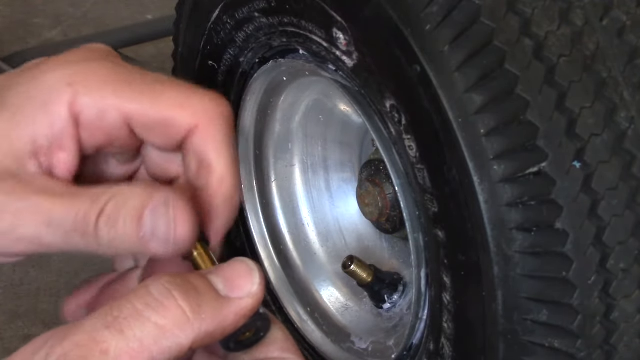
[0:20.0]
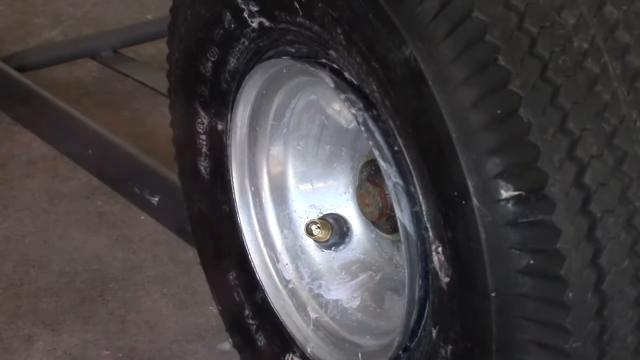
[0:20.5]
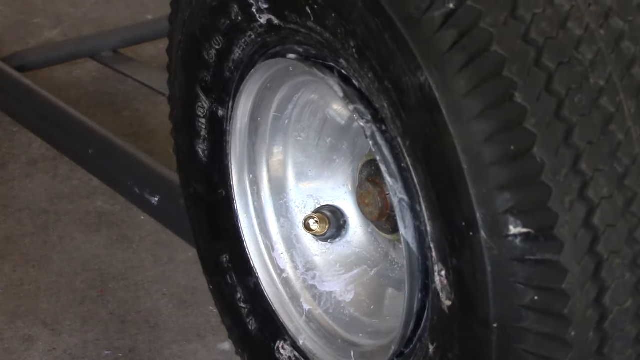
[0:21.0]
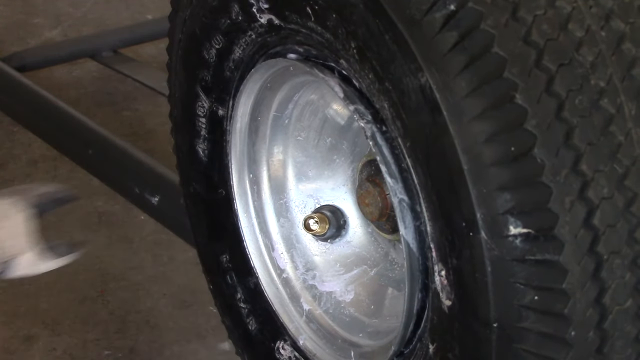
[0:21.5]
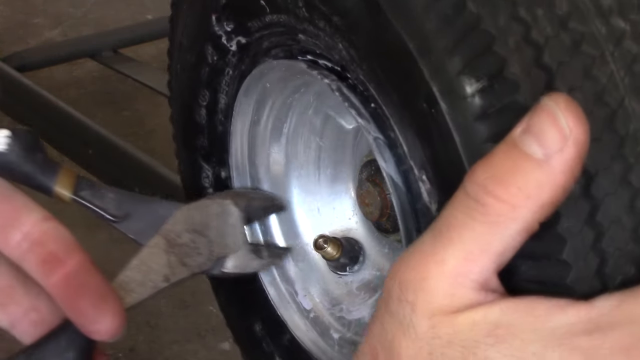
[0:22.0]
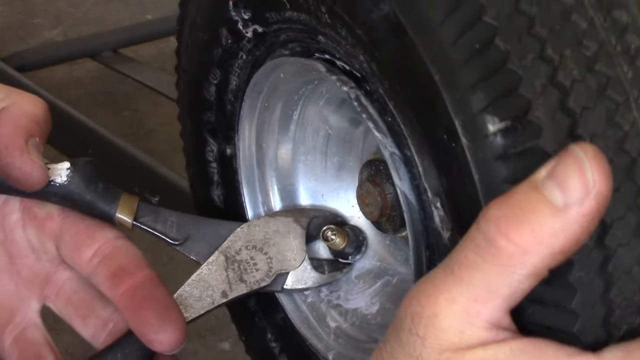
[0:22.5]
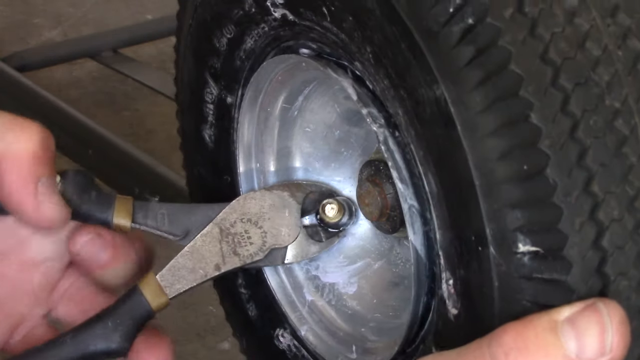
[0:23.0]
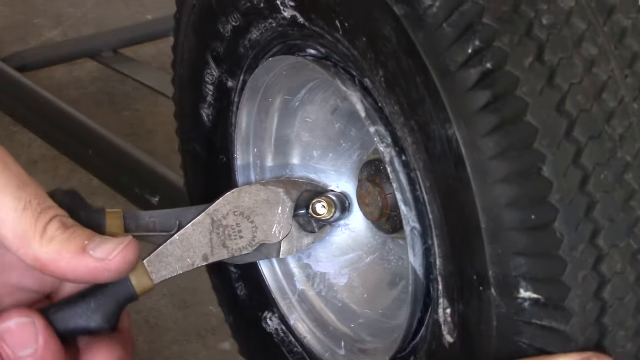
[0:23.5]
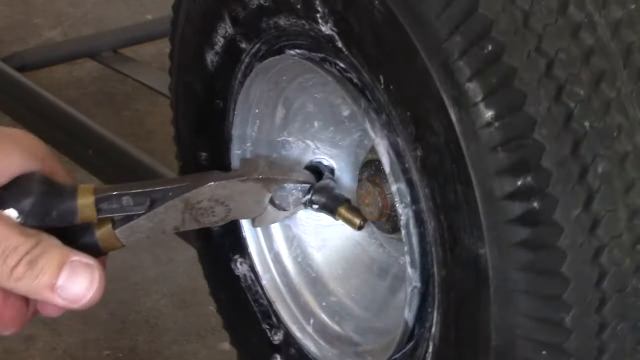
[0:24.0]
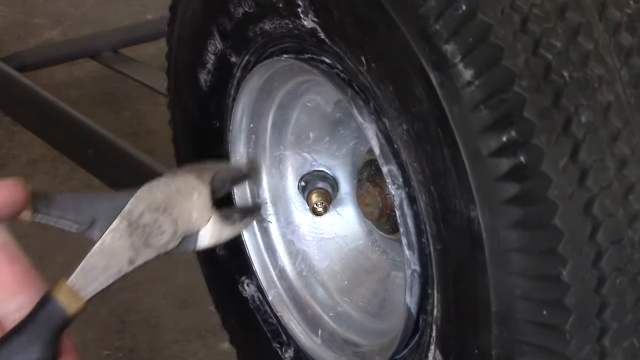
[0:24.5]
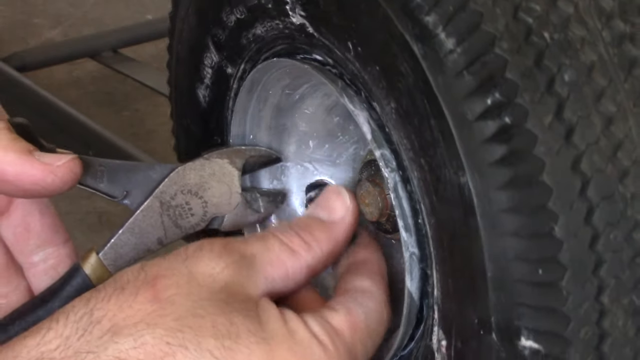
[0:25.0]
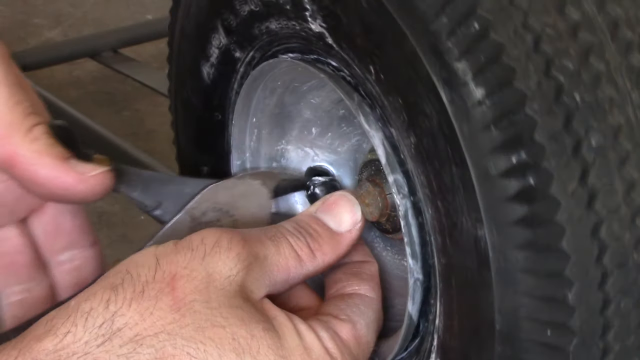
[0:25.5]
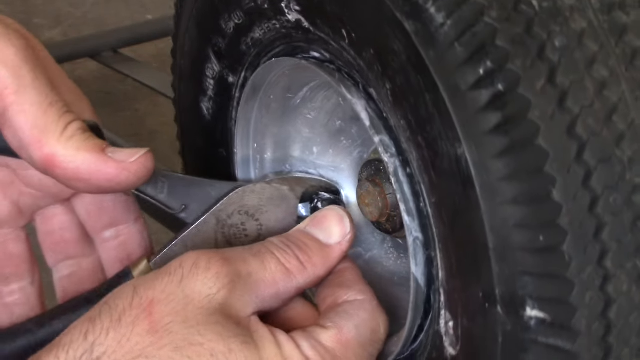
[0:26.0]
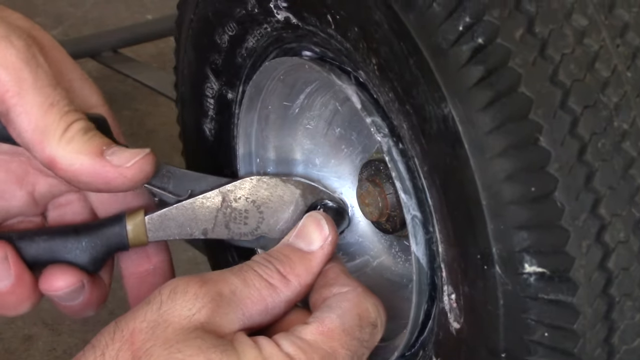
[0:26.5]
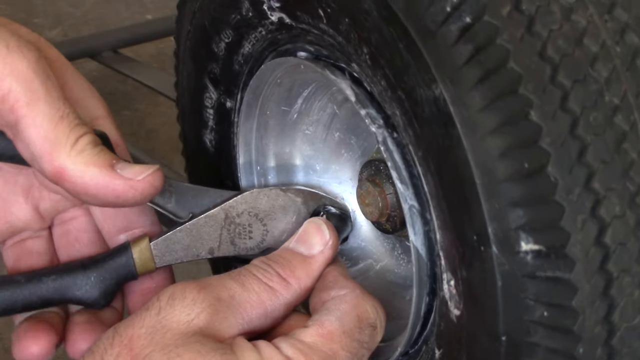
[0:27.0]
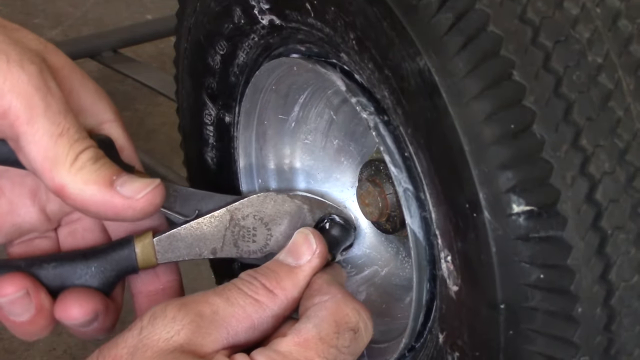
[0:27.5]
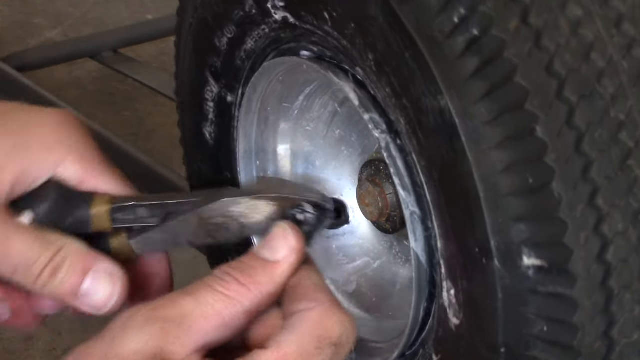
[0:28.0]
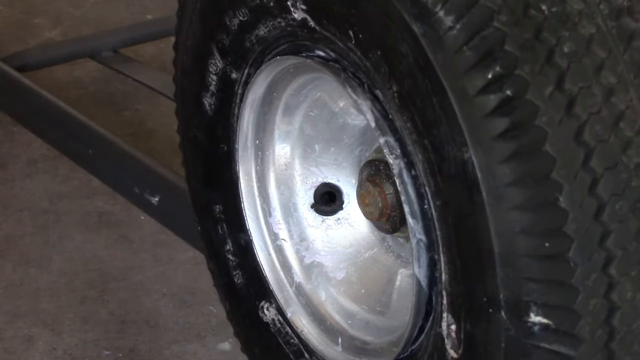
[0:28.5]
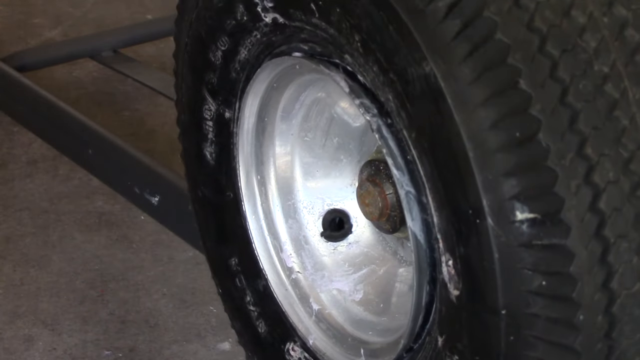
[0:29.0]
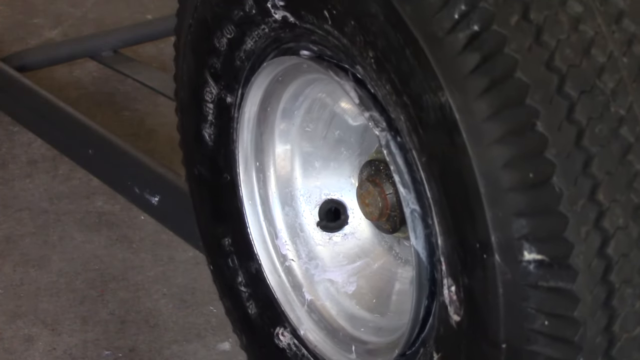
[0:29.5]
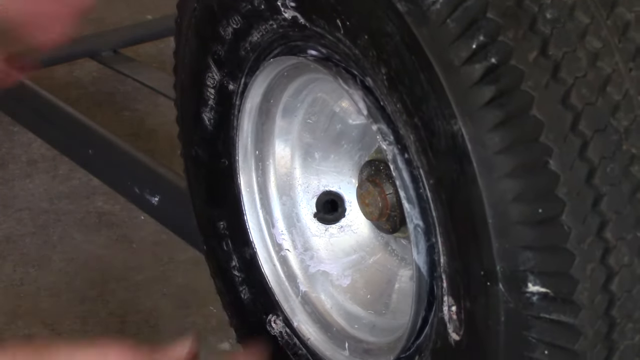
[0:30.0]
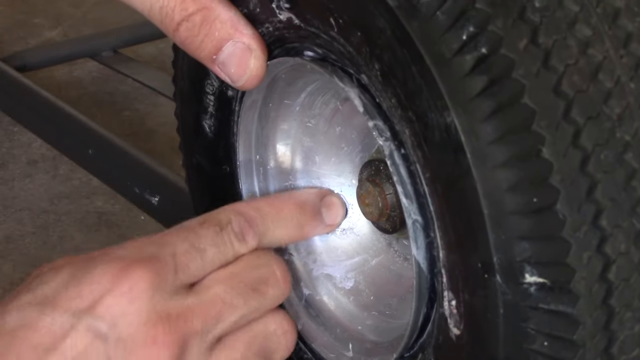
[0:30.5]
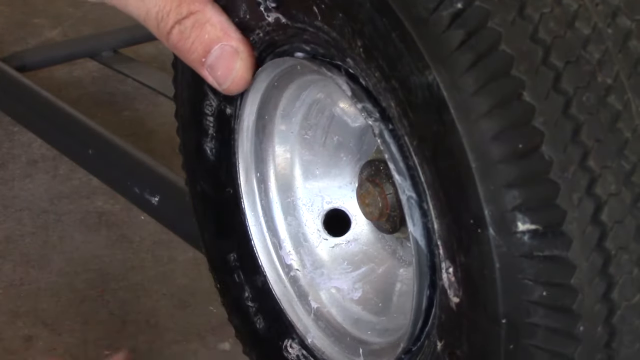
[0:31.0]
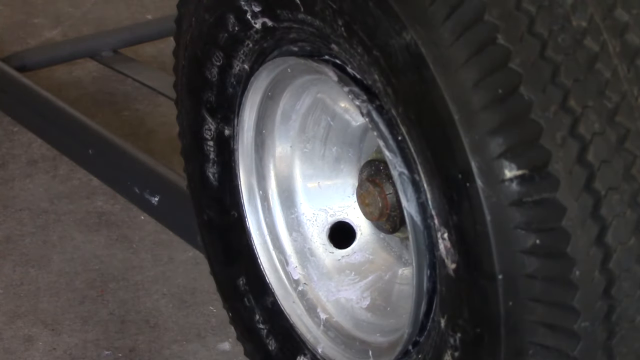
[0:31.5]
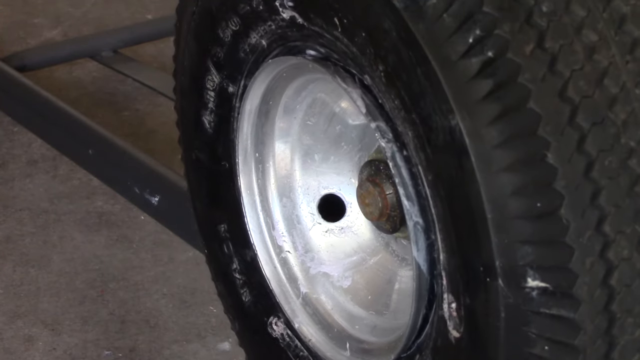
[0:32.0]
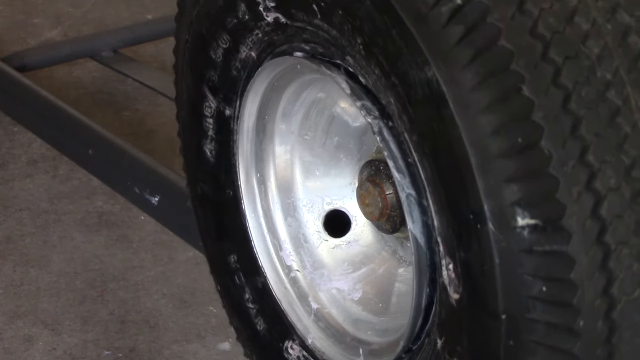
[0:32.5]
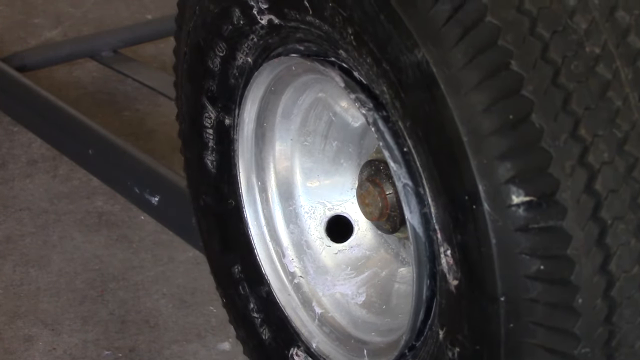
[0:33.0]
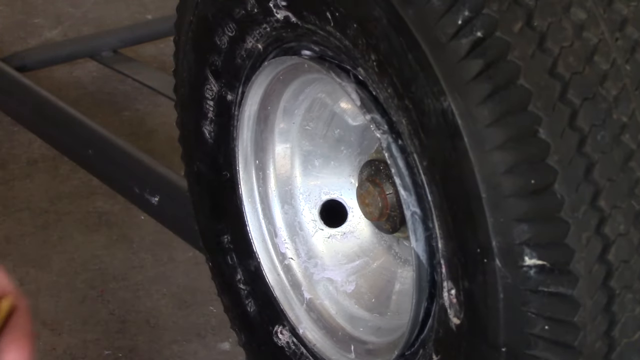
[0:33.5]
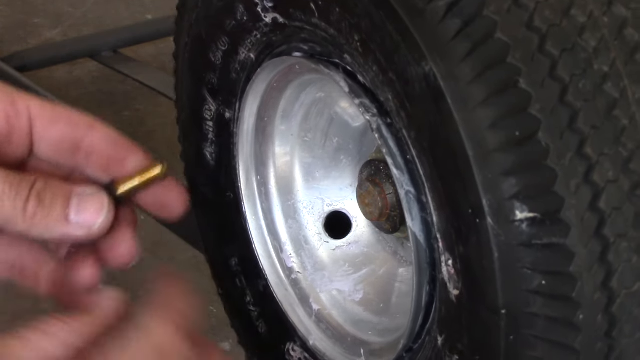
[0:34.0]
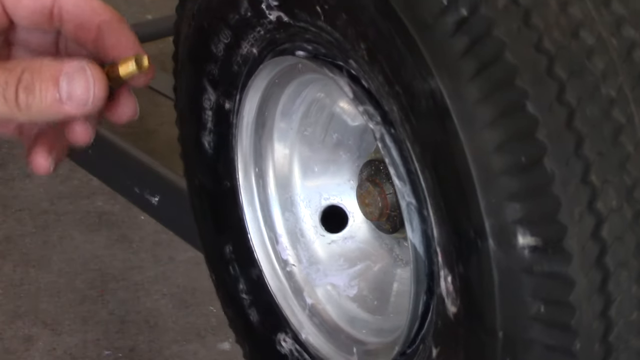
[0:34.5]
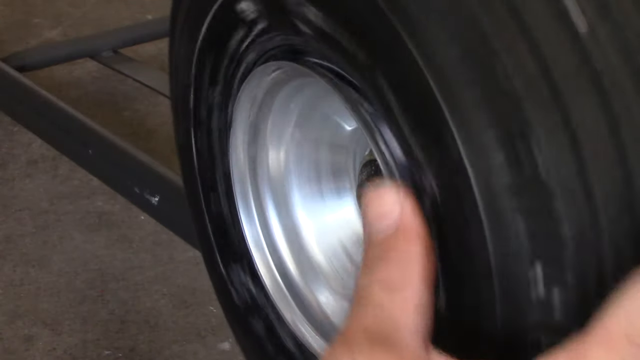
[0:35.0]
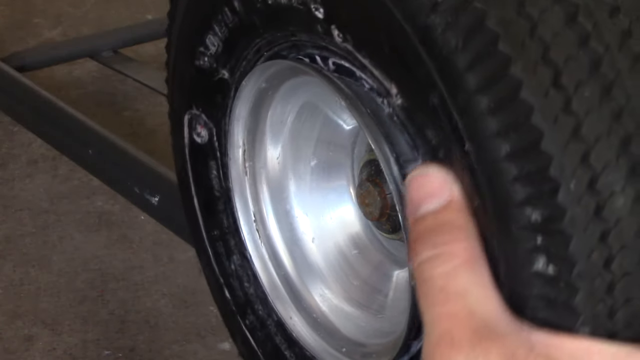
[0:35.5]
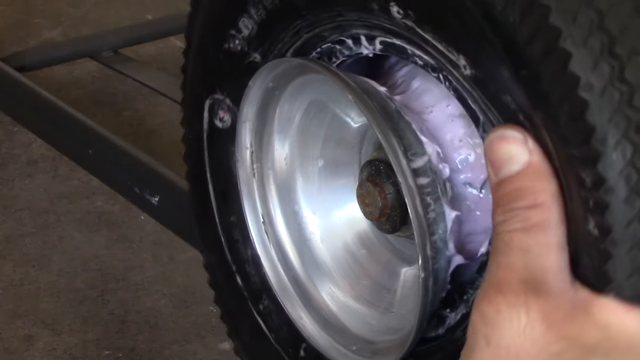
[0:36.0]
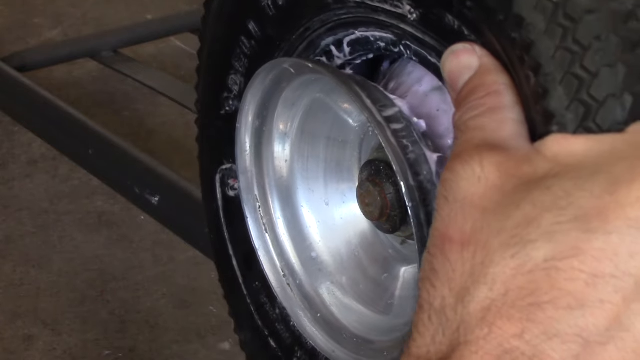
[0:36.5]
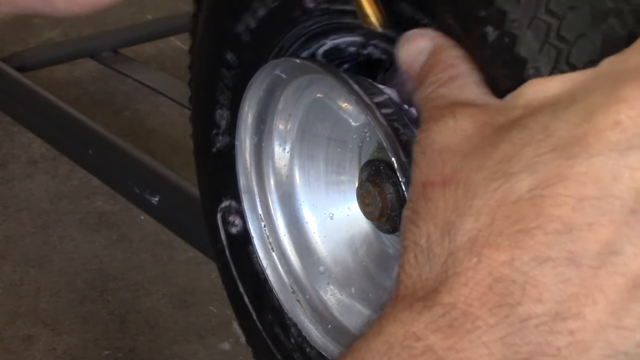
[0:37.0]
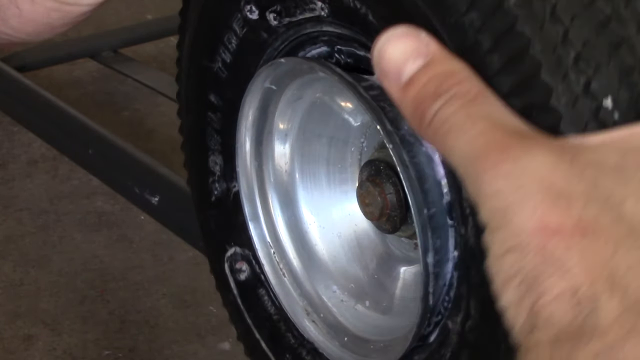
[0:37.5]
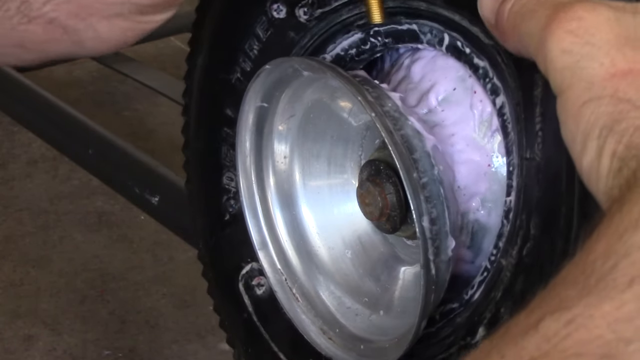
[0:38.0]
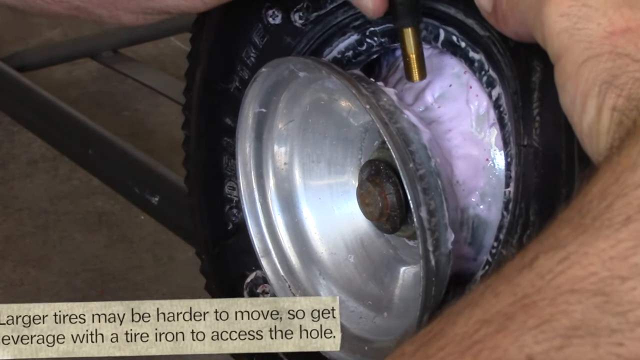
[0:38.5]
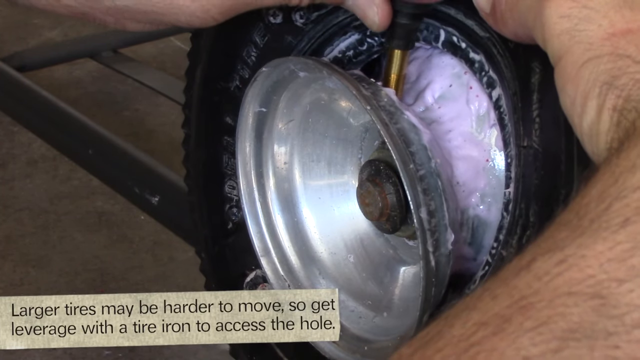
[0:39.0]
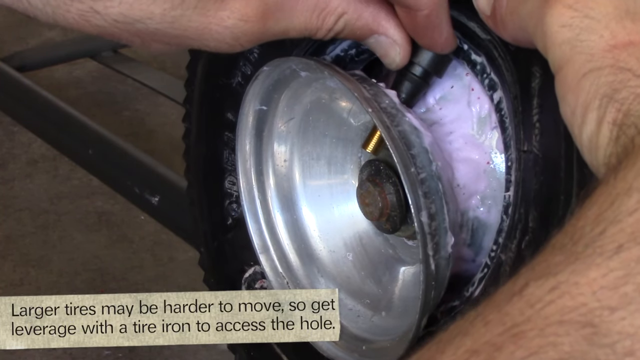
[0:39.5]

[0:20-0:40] The man holds the valve stem between both hands, gripping it with the thumb and forefinger of his left hand and the thumb and forefinger of his right hand, twisting the cap off in a constant twisting motion. The scene changes, and he applies a pair of pliers to the valve stem that is already attached to the tire, using them to pry the valve stem away from the tire. Once it is removed, he touches that area of the tire with his finger. He then disassembles the tire, and the spot where the tire is separated from the rim is visible. As the tire is moved away from the rim, there appears to be a light pink foamy substance inside, between the rubber of the tire and the metal of the rim; what the substance is remains unclear.